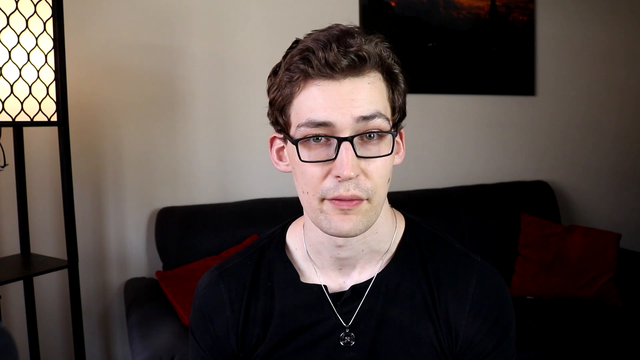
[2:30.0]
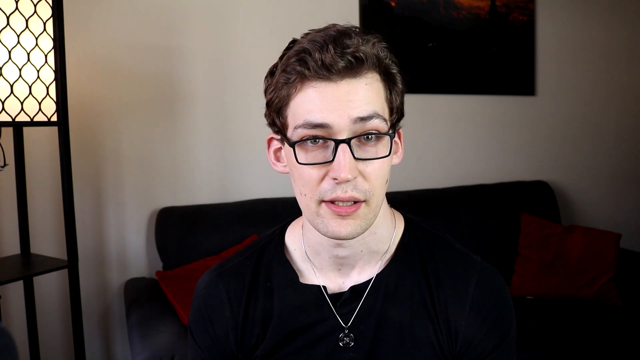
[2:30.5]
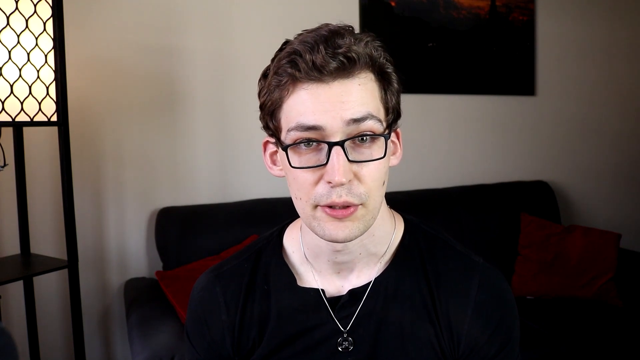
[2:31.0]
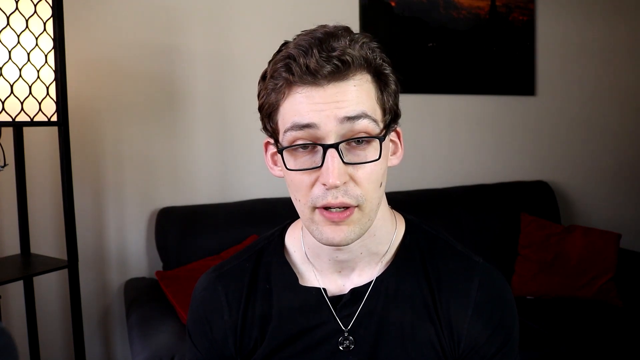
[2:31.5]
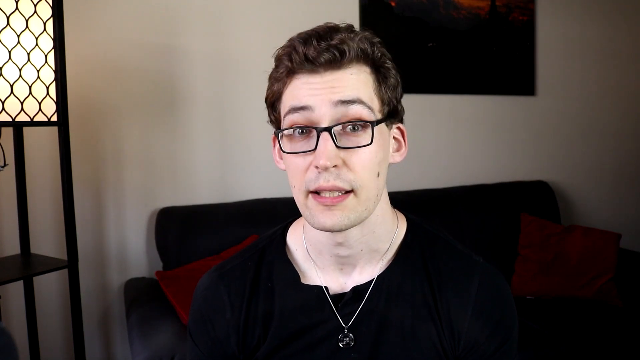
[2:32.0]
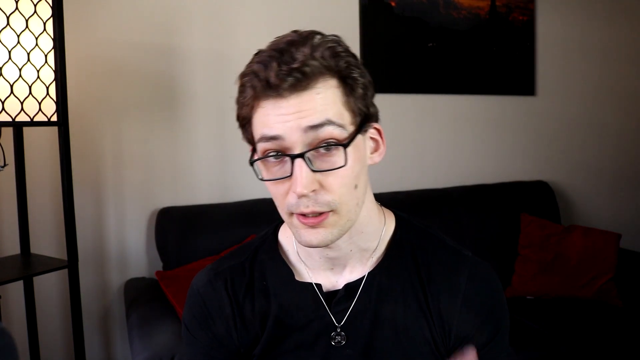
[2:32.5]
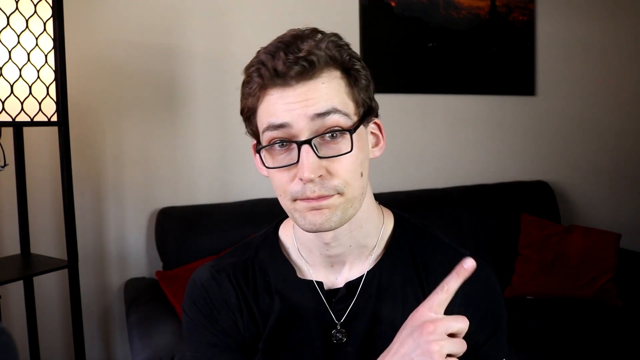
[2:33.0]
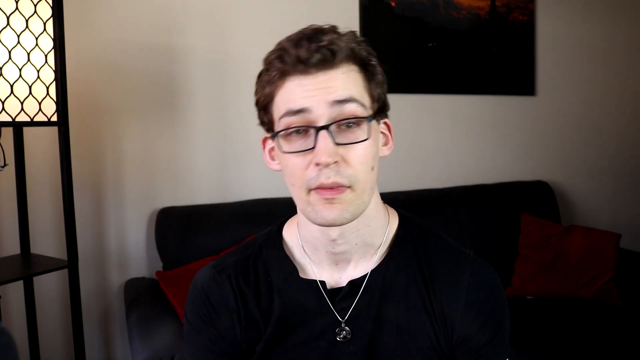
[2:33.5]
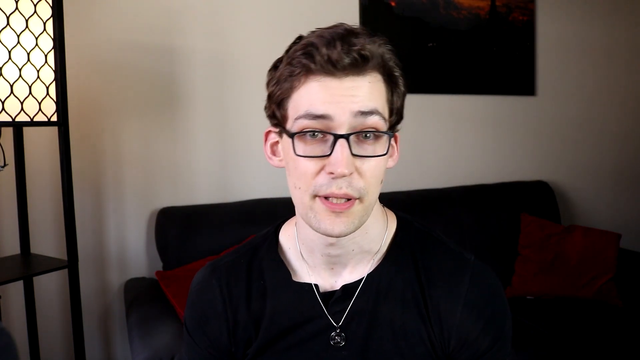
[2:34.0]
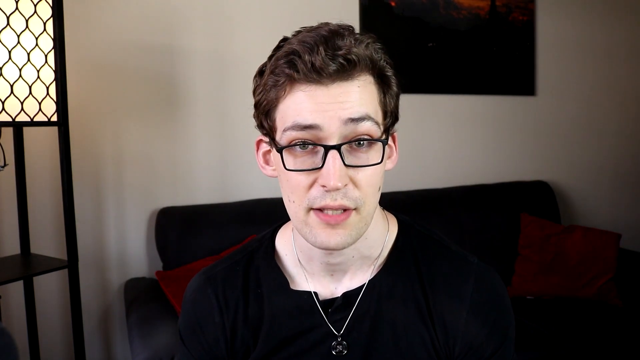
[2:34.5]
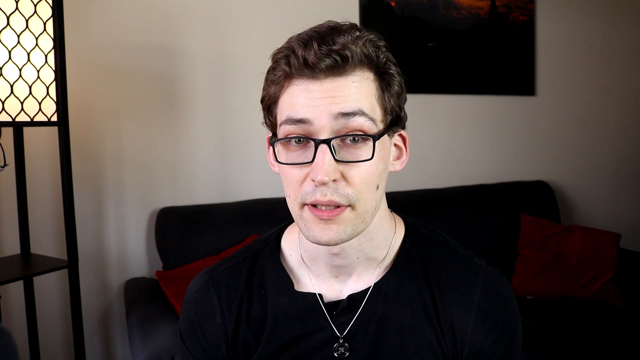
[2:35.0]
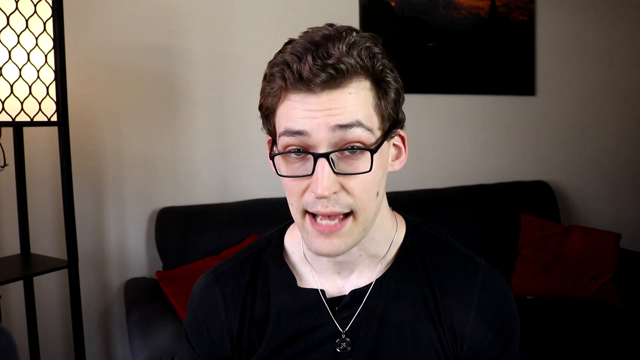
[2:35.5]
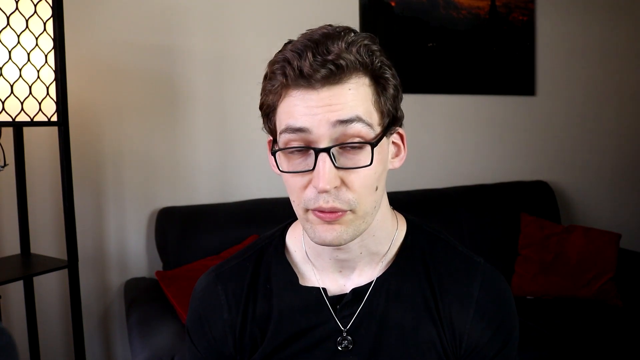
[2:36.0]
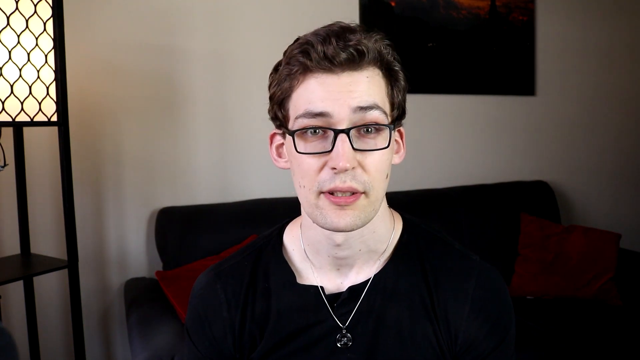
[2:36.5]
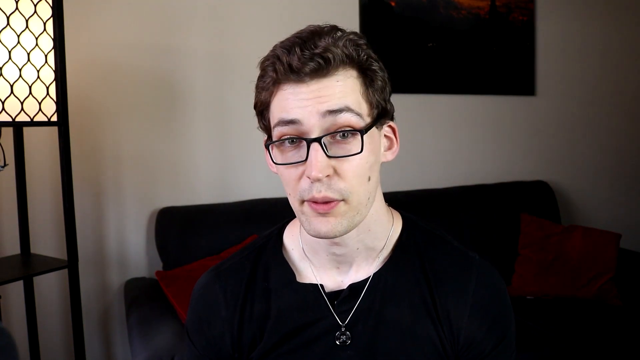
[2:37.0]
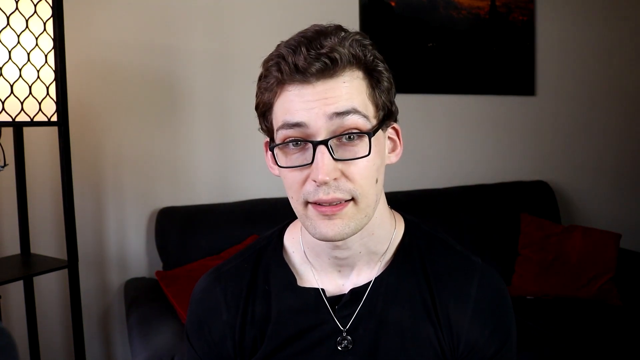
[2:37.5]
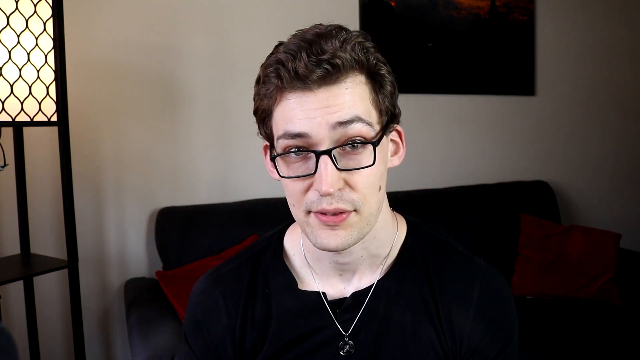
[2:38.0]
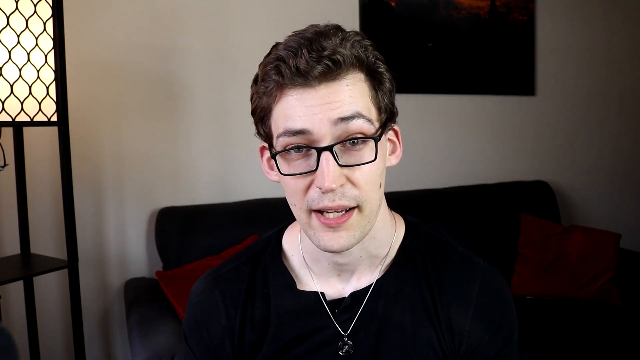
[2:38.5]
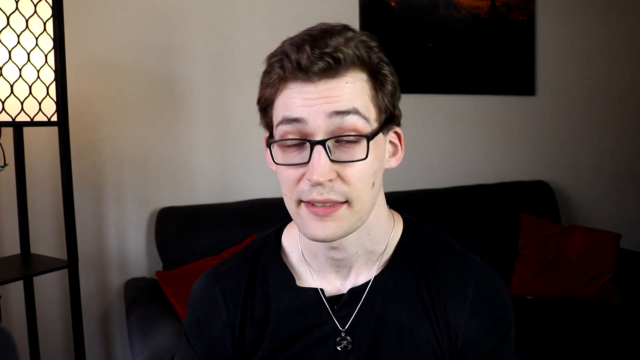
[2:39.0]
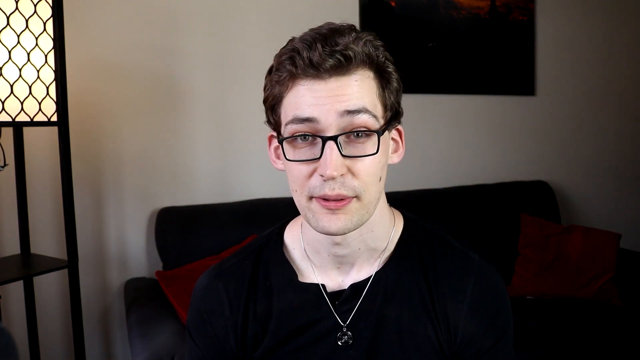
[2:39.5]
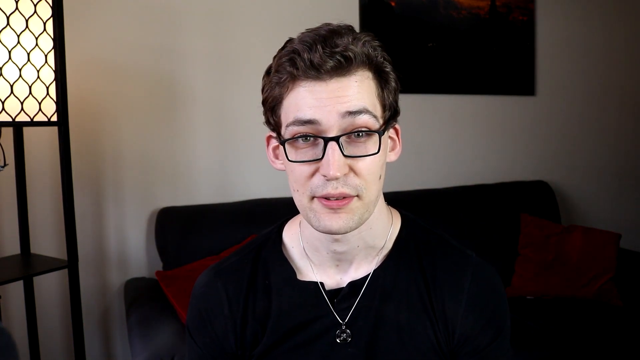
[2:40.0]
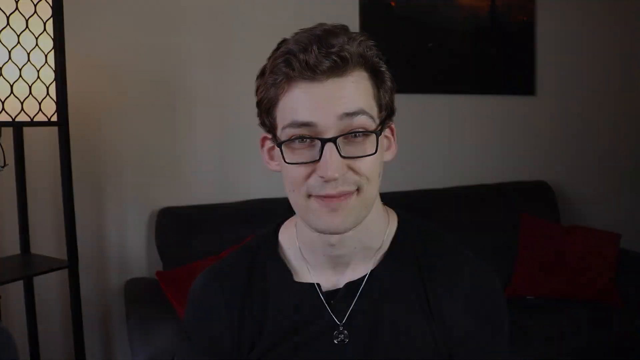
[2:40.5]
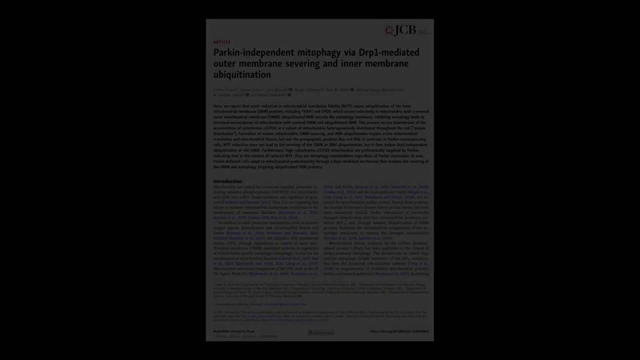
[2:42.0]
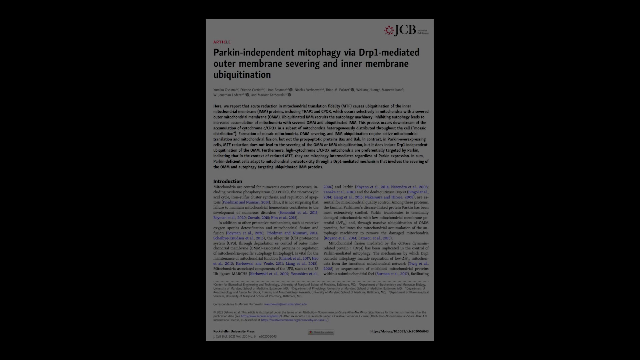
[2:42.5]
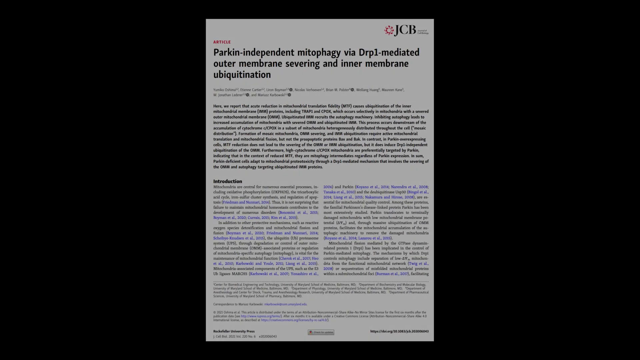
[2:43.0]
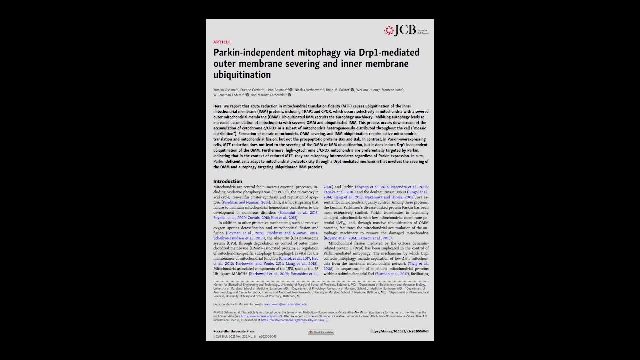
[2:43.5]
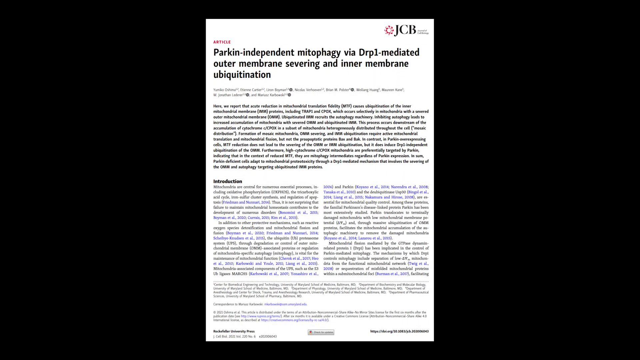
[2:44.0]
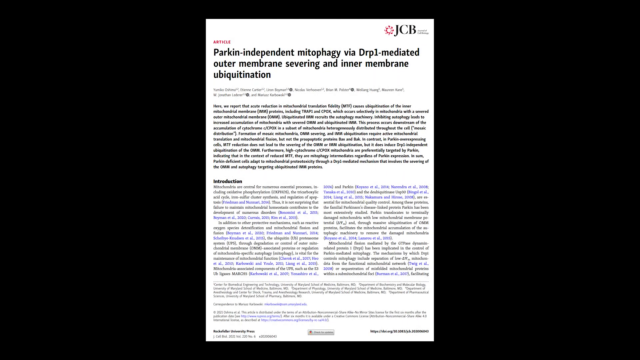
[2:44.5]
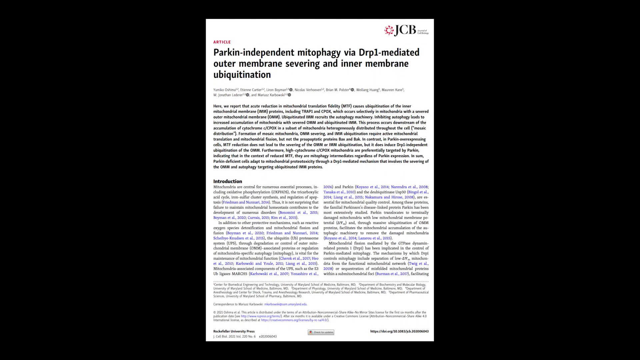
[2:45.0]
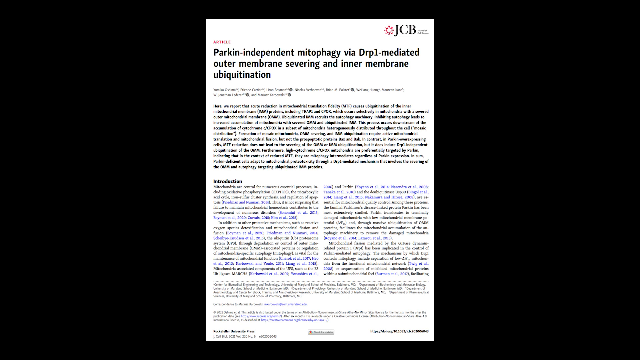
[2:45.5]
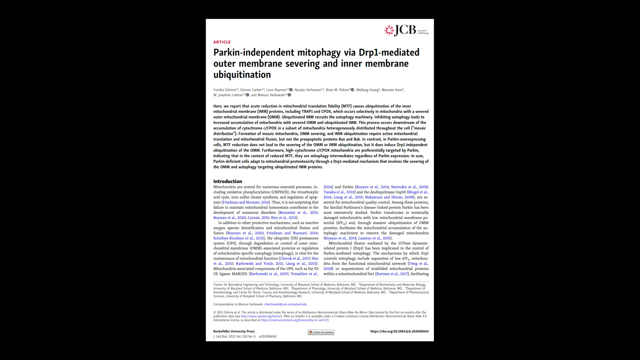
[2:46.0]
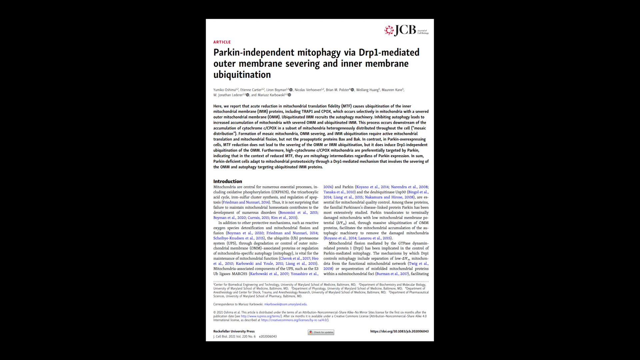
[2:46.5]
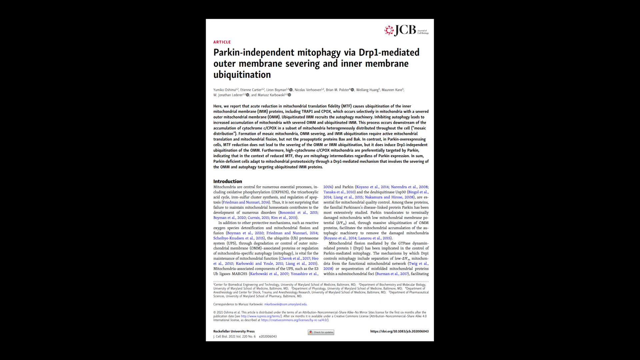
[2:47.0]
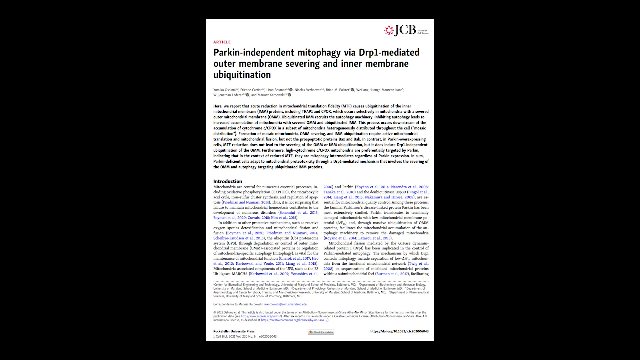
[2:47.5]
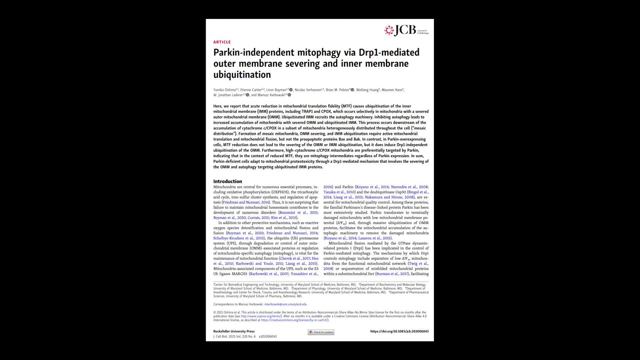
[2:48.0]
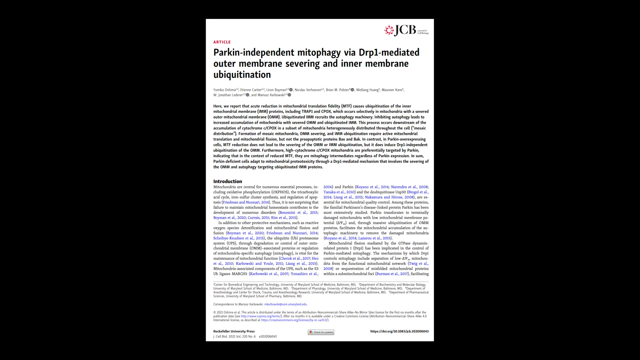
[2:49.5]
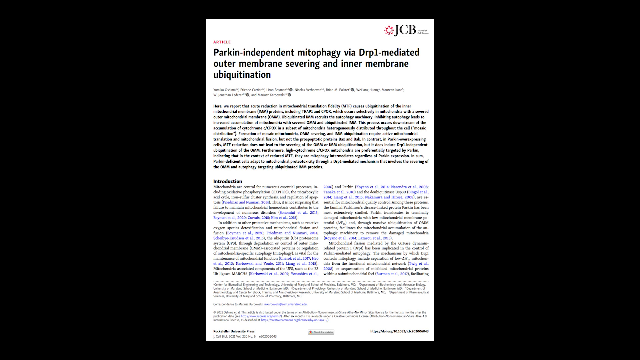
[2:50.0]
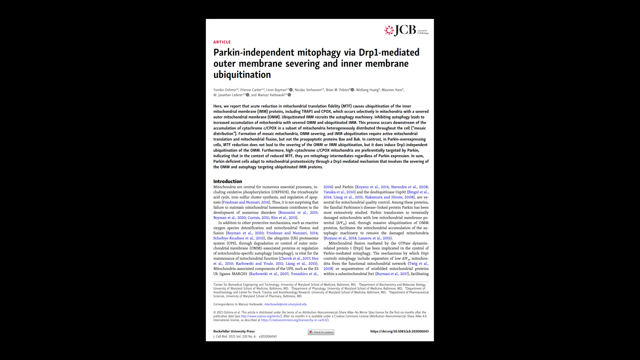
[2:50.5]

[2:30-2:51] Nicholas points to the right side of the video. The picture then fades to black and shows what looks like the first page of the article he contributed to.